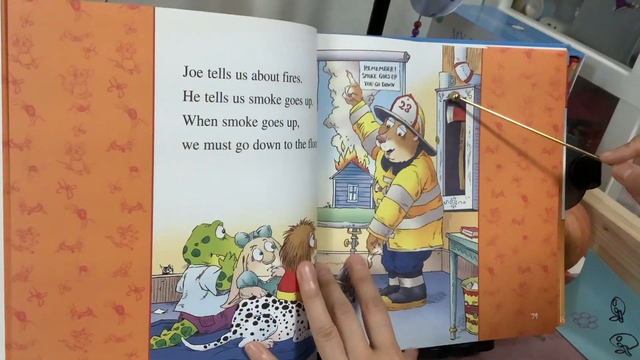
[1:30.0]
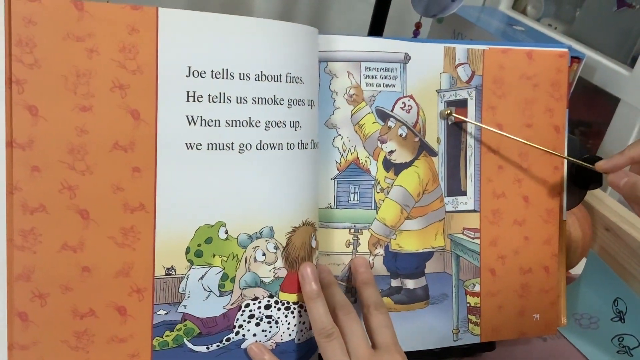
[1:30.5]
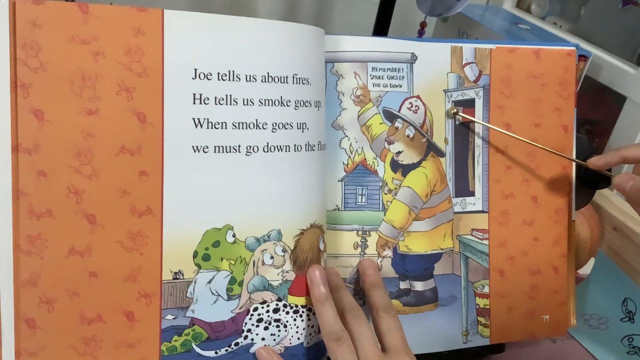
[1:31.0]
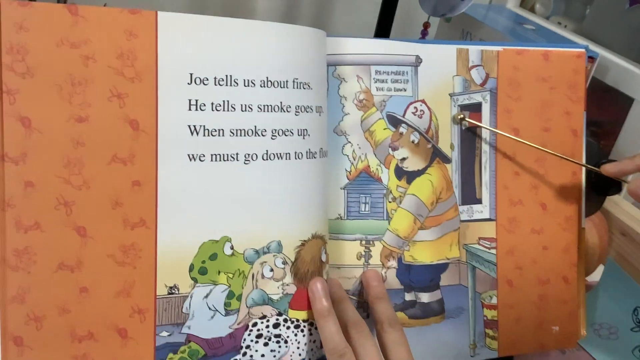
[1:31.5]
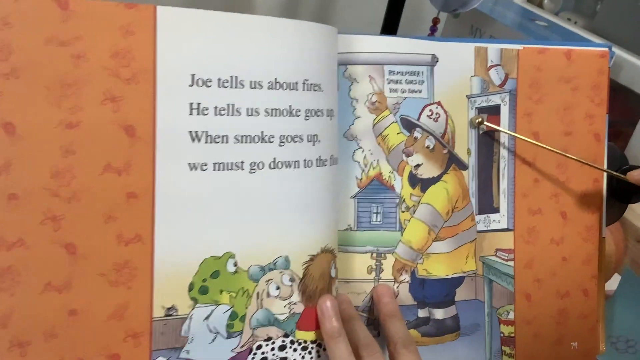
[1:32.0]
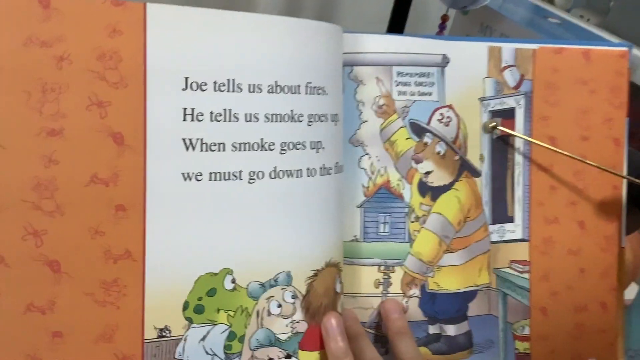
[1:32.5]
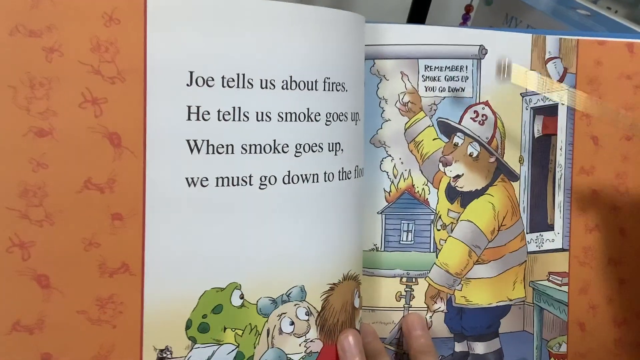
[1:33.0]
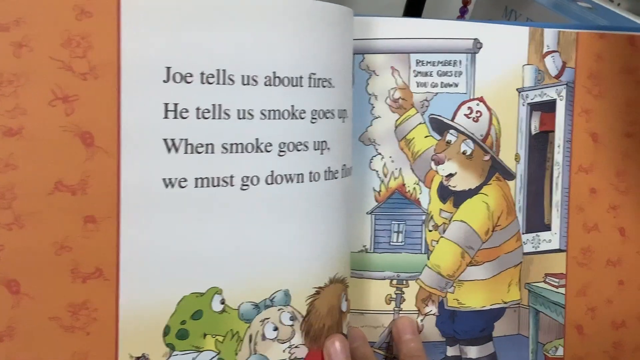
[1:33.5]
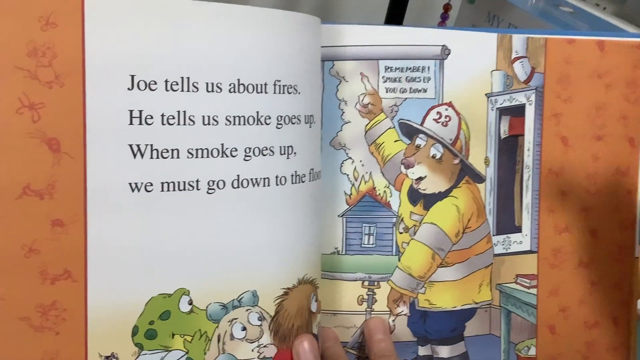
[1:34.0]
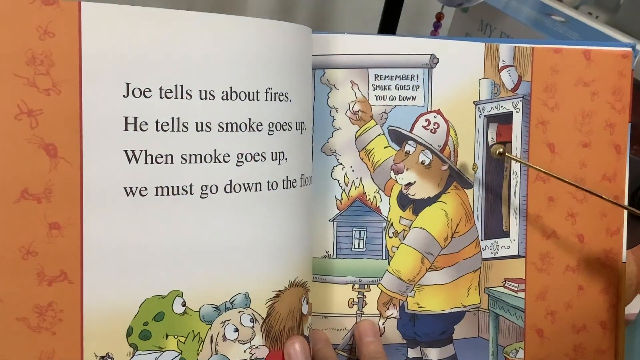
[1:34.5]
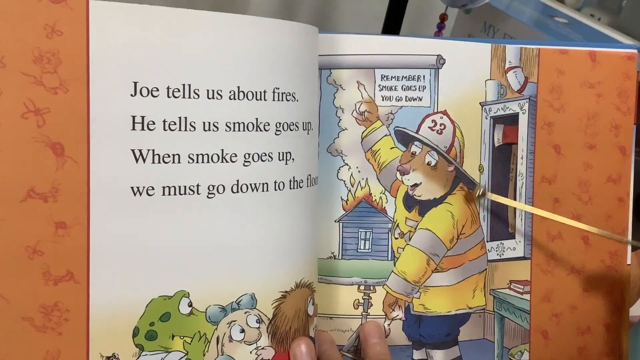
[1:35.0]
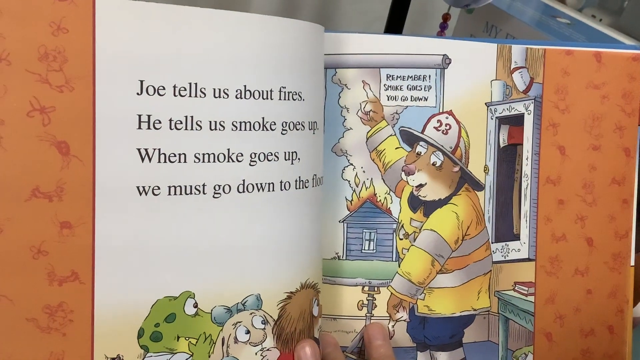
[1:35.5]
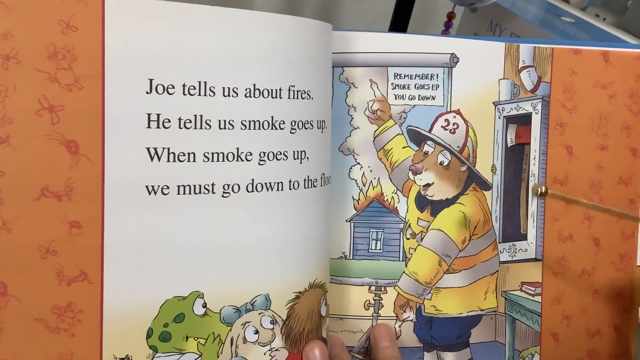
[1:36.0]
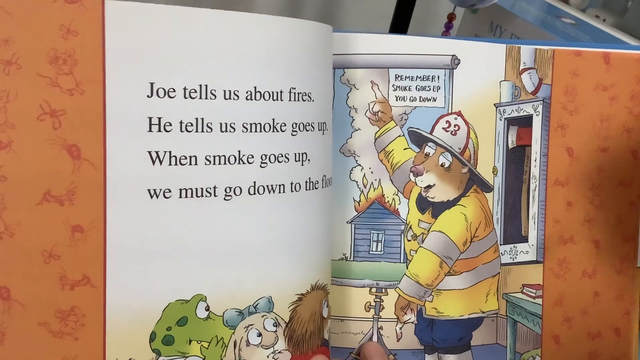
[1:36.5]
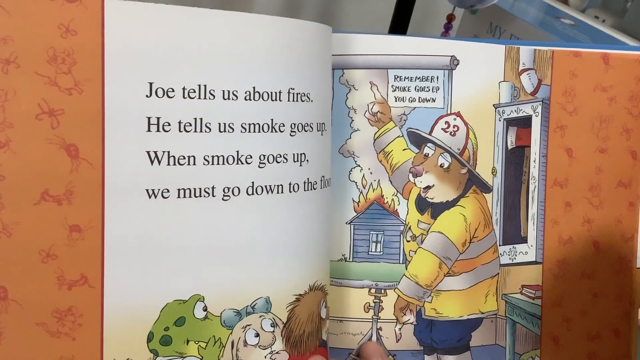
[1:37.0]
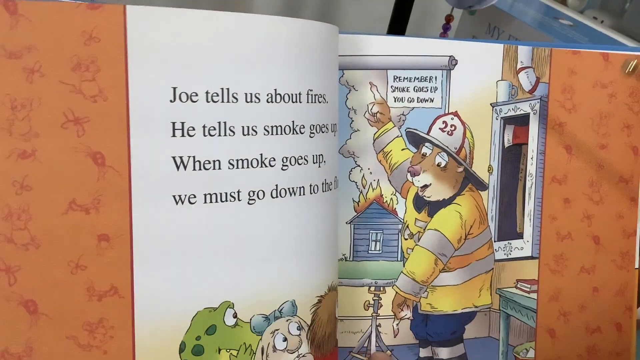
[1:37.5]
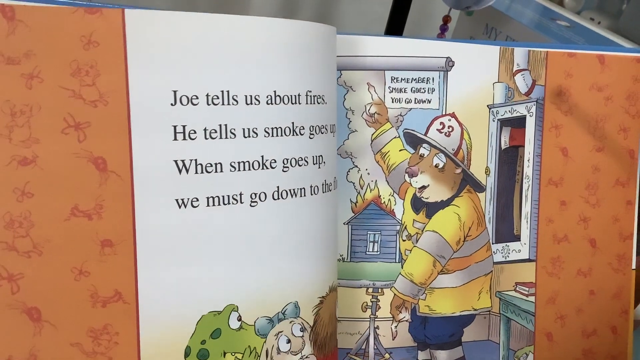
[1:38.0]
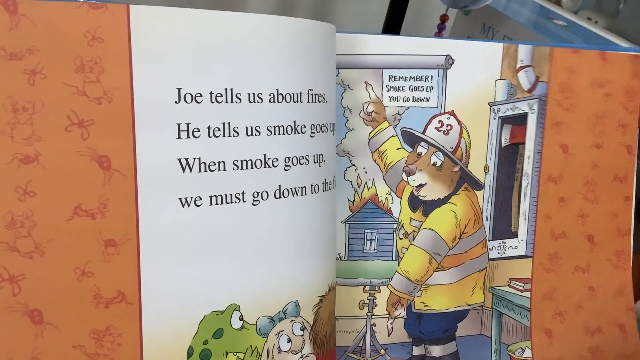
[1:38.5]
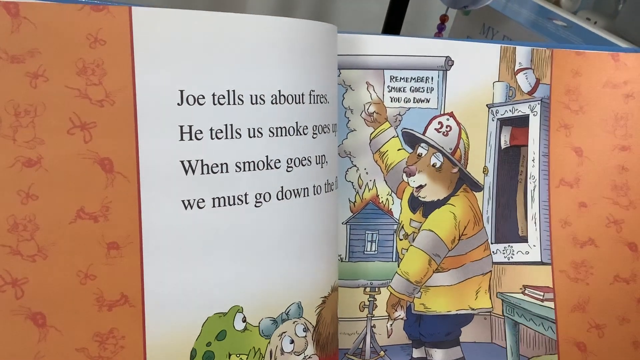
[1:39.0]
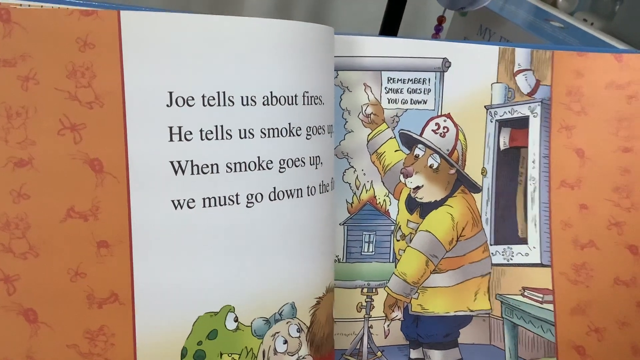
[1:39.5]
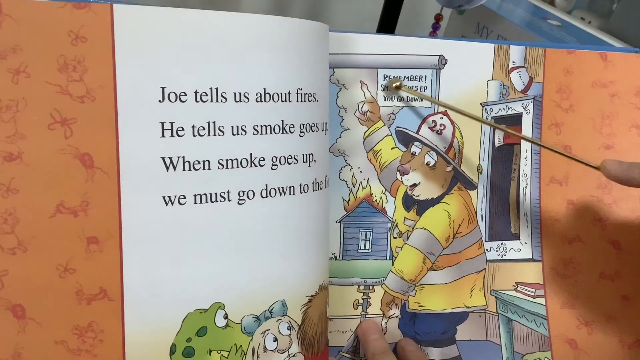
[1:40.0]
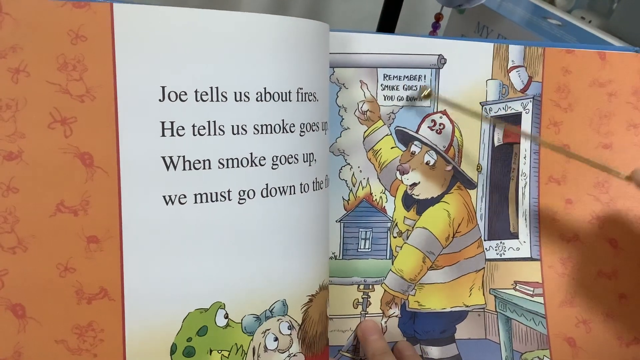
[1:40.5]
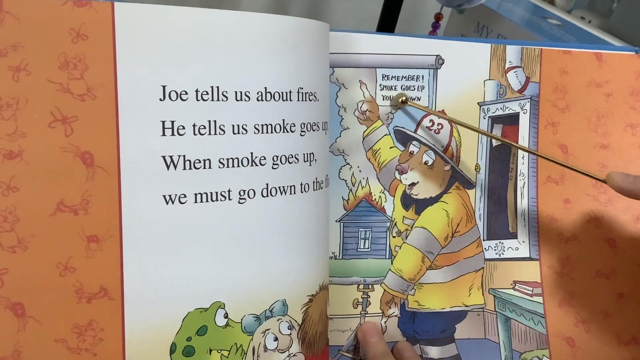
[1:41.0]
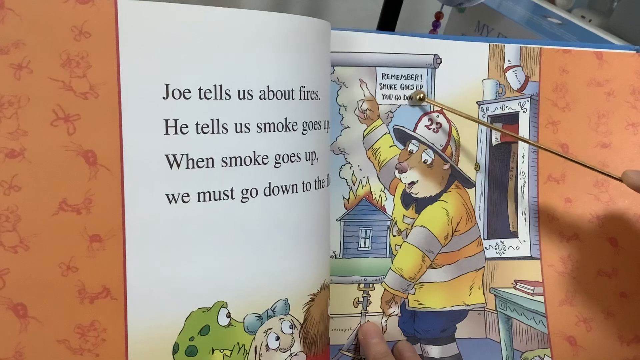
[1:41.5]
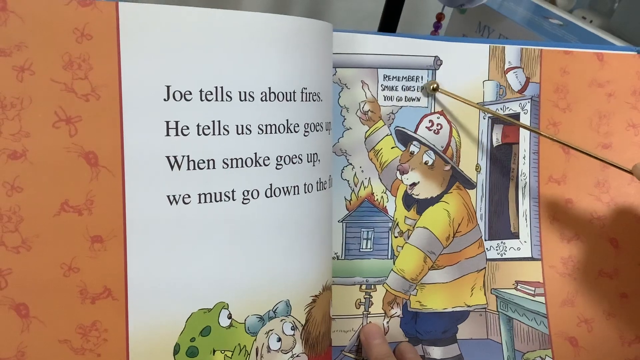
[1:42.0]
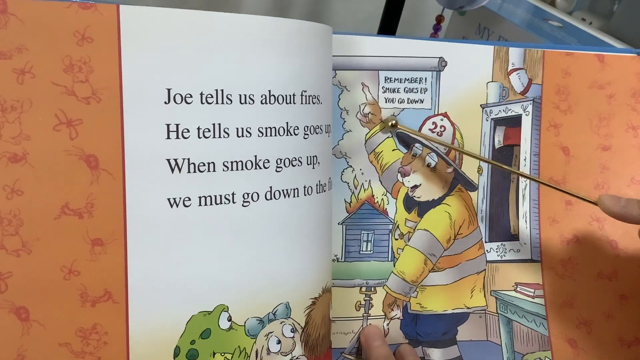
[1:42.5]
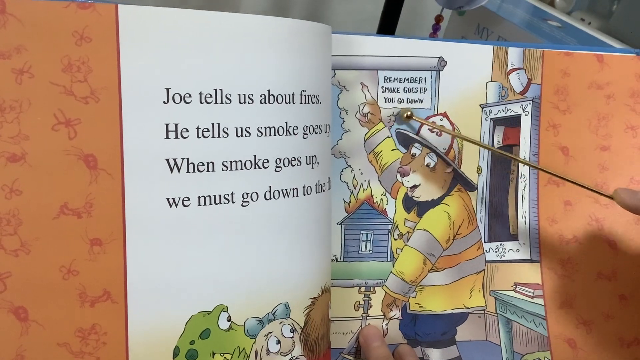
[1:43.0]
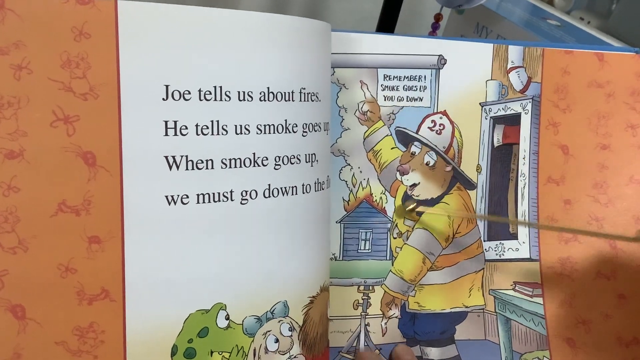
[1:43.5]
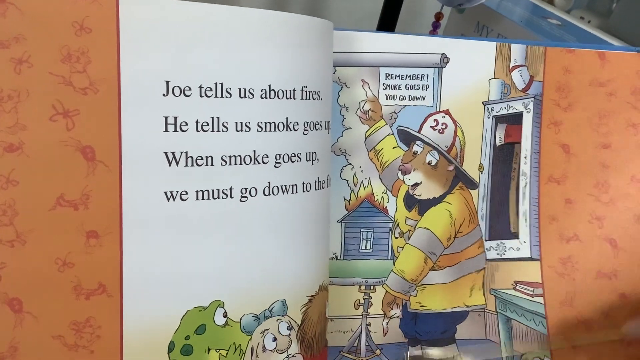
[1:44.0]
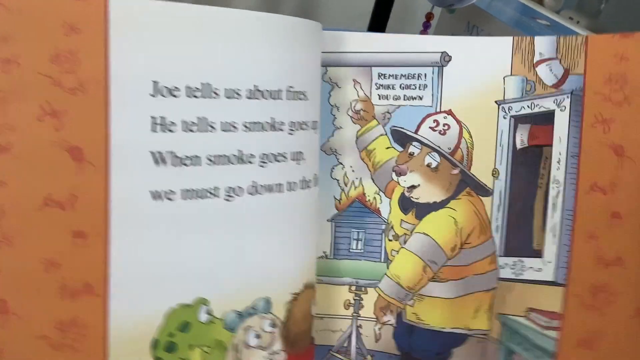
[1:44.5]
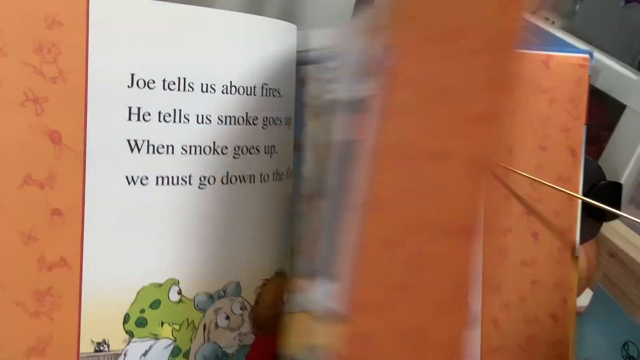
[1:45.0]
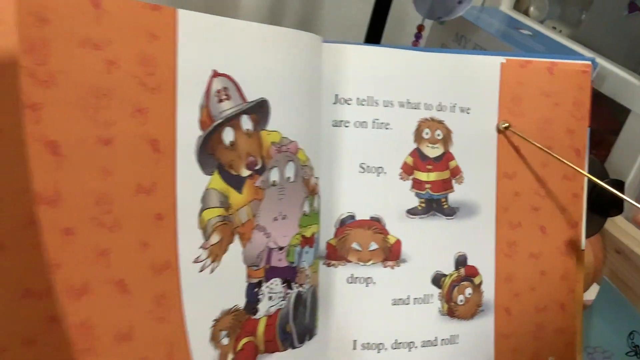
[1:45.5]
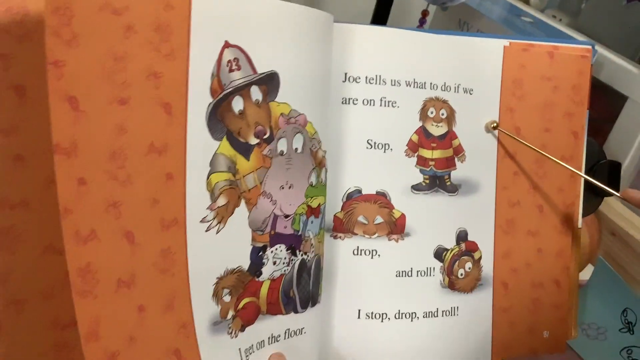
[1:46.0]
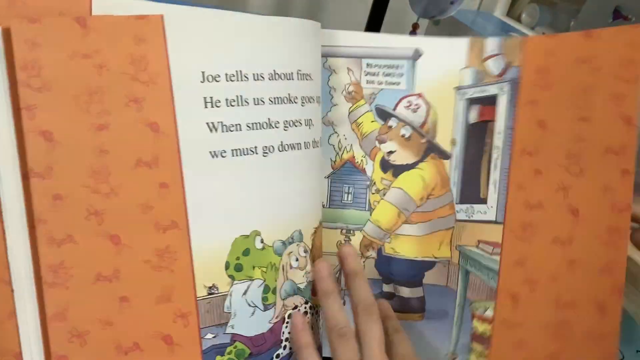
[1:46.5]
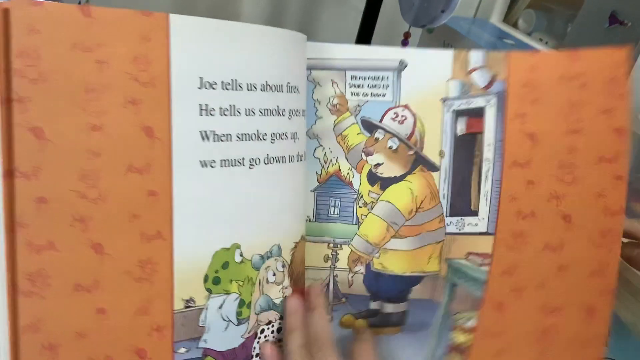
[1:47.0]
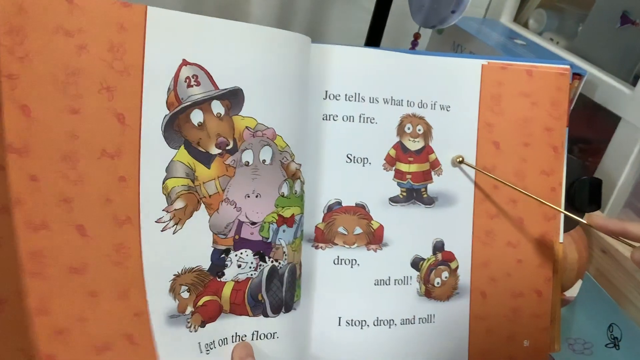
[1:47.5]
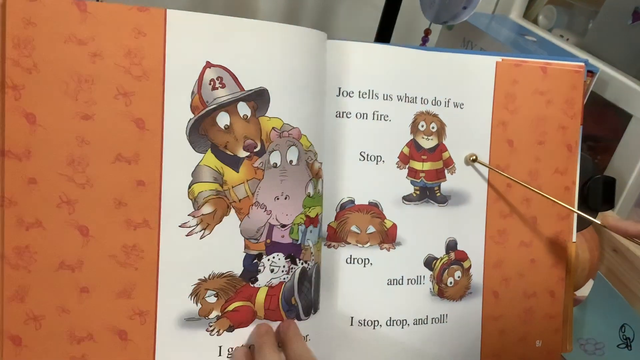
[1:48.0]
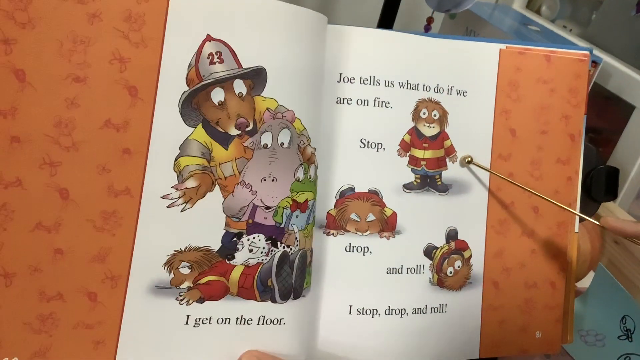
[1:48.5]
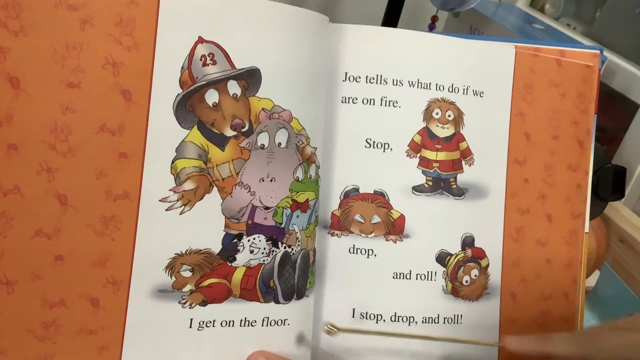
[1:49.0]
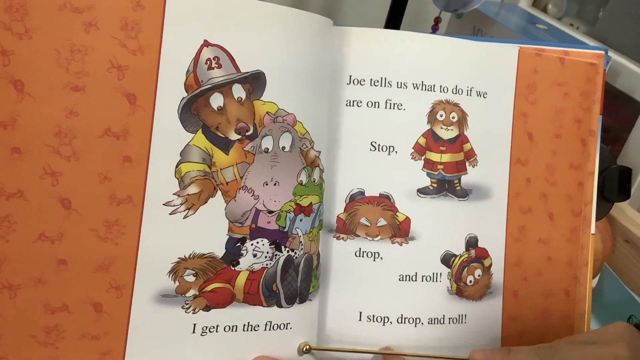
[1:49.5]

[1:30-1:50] The next page is again set in the fireman office, where the fireman bear is going through a set of slides with three of the animal children: the child crocodile, the child rabbit and the child dog. In the room there are books and a fireman axe. The text on this page says, "Joe tells us about fires. He tells us a smoke goes up. When smoke goes up, we must go down to the floor." One of the slides says, "remember, smoke goes up, you go down." The next page shows five characters: the fireman bear, the hippo child, the frog child, the Dalmatian dog and the dog child. The text says, "Joe tells us what to do if we are on fire. Stop, drop and roll. I stop, drop and roll." Three illustrations show the dog child rolling.